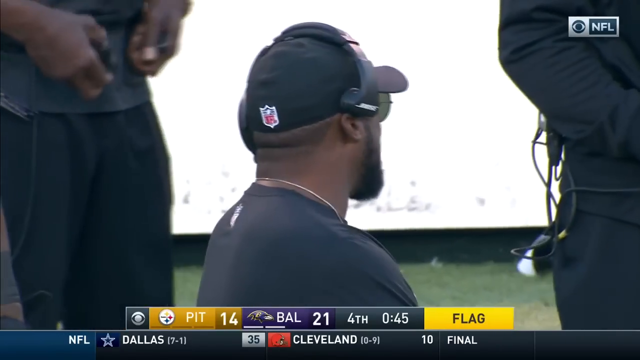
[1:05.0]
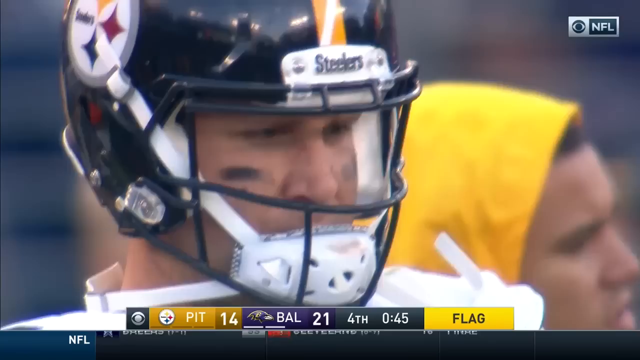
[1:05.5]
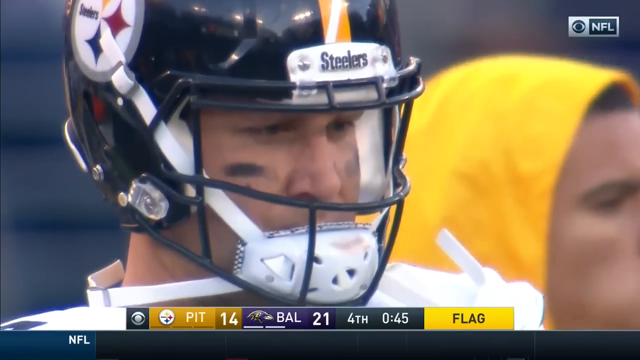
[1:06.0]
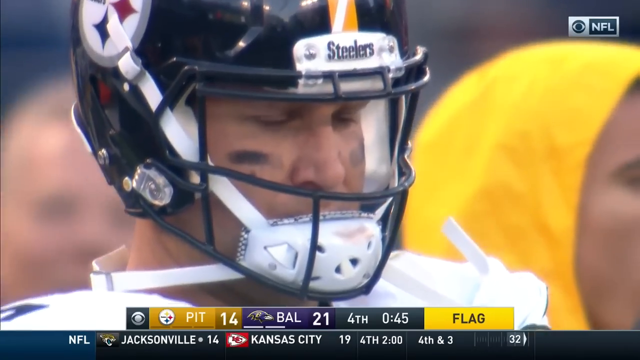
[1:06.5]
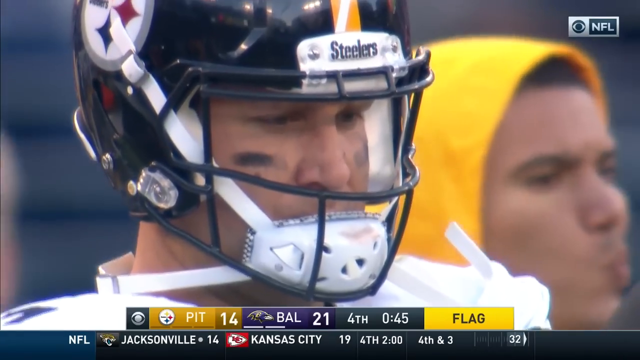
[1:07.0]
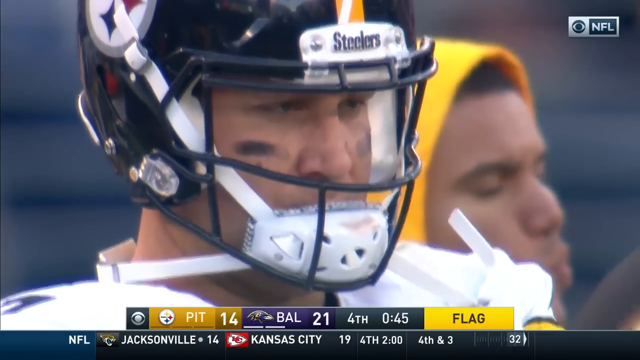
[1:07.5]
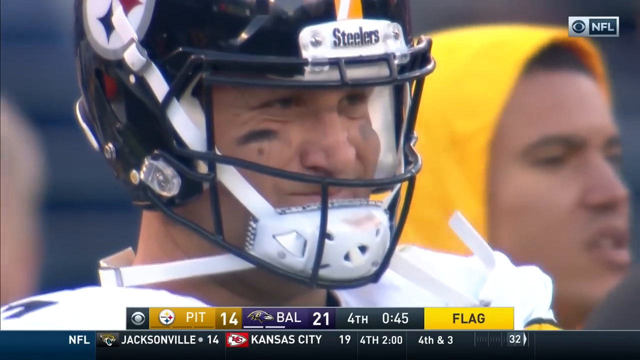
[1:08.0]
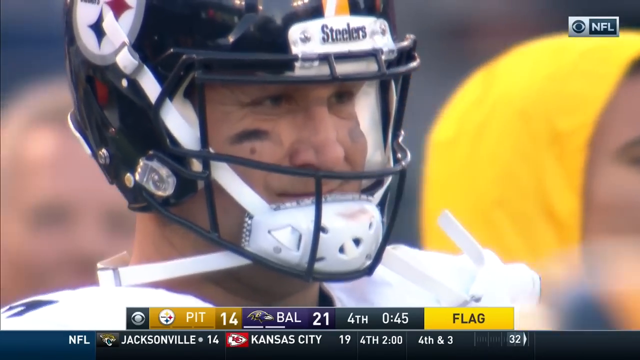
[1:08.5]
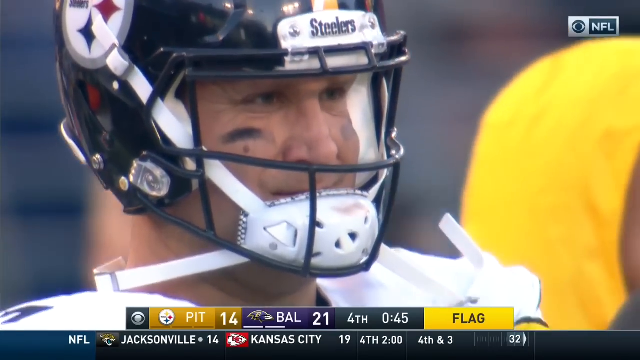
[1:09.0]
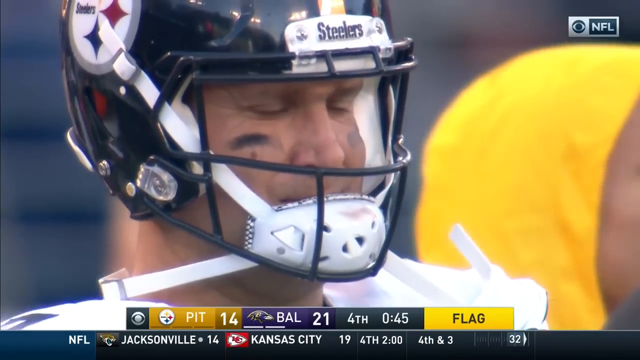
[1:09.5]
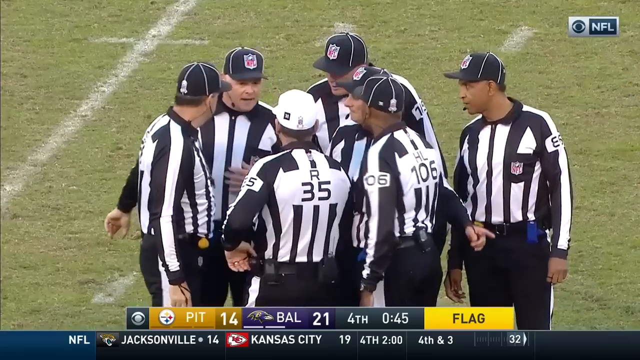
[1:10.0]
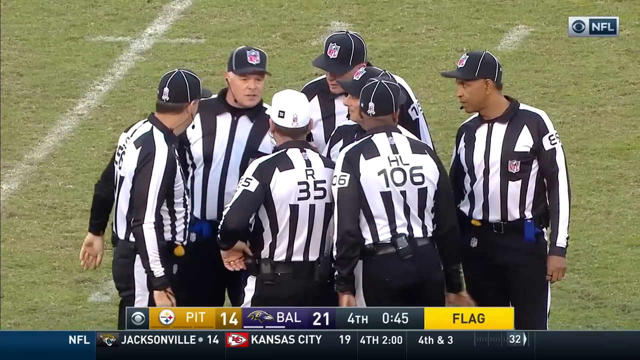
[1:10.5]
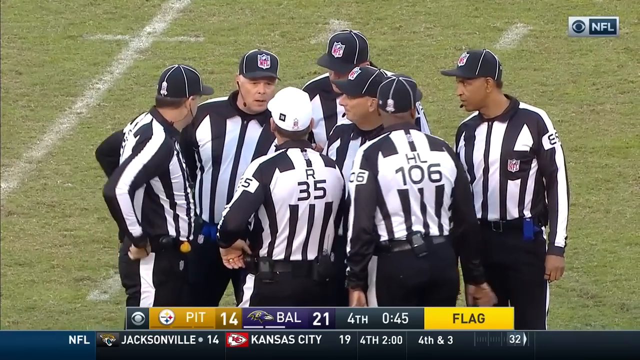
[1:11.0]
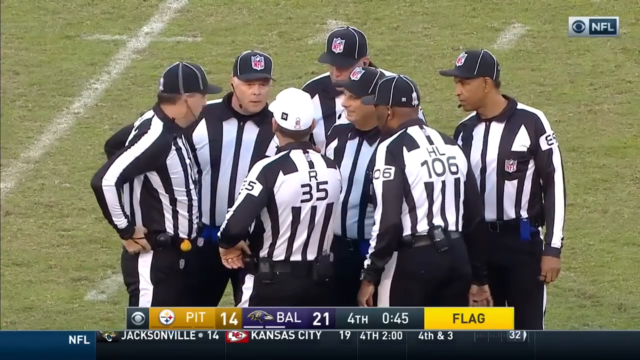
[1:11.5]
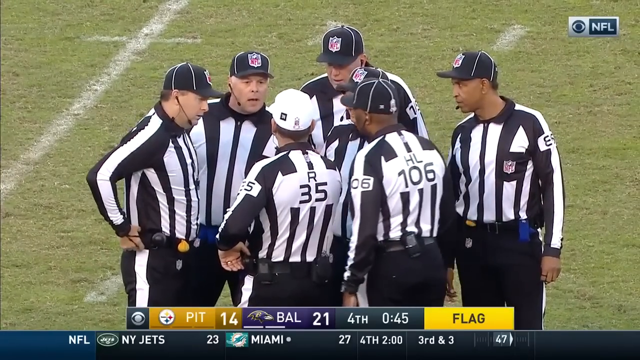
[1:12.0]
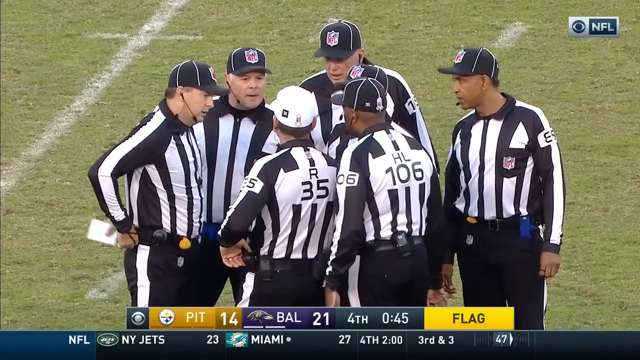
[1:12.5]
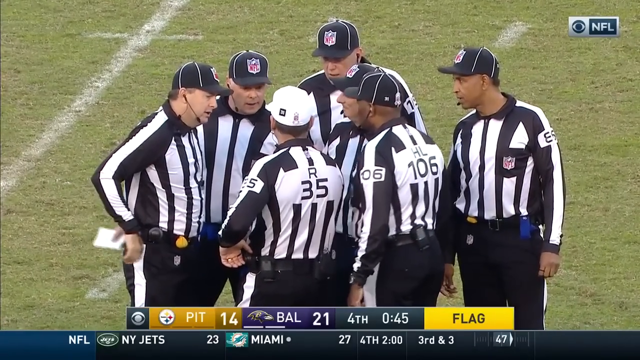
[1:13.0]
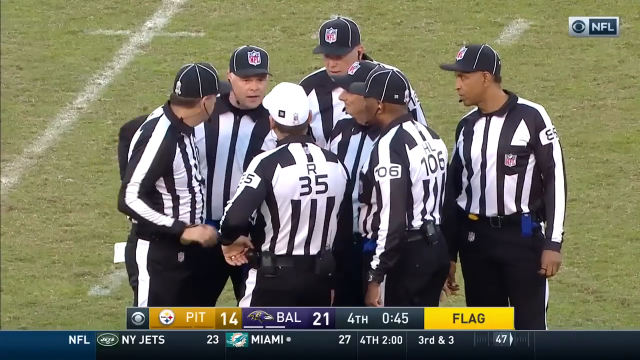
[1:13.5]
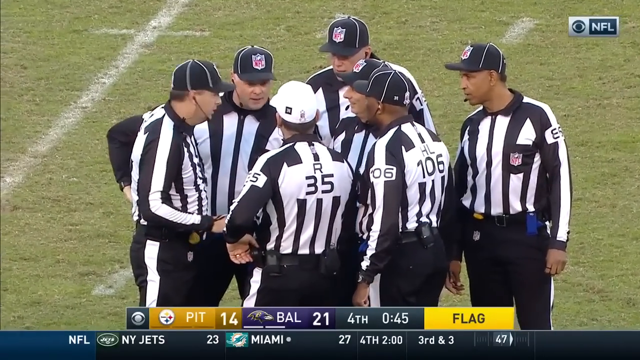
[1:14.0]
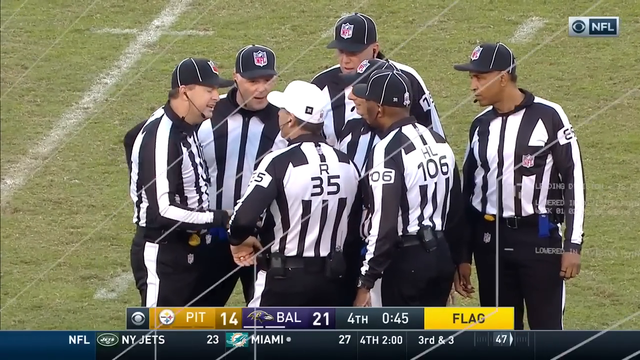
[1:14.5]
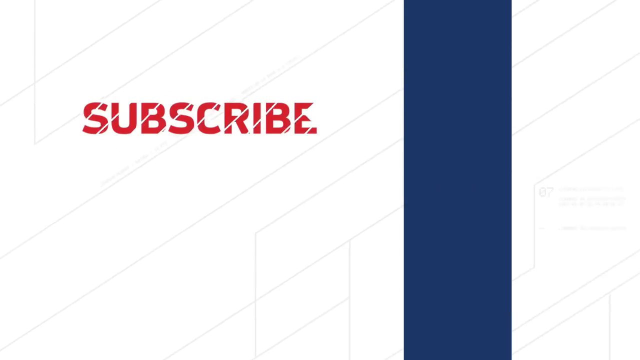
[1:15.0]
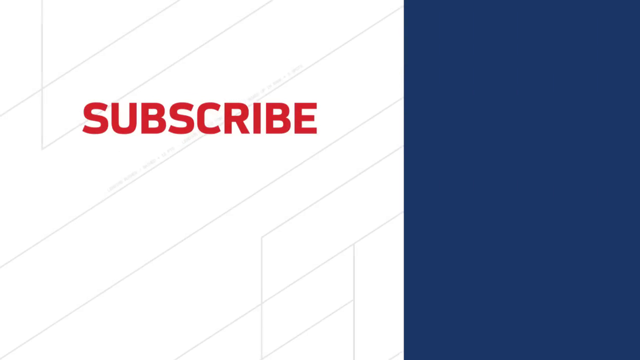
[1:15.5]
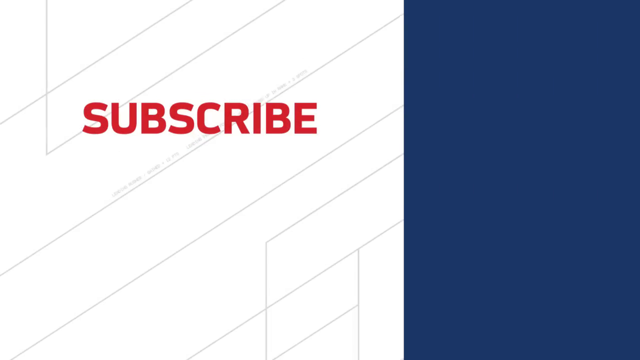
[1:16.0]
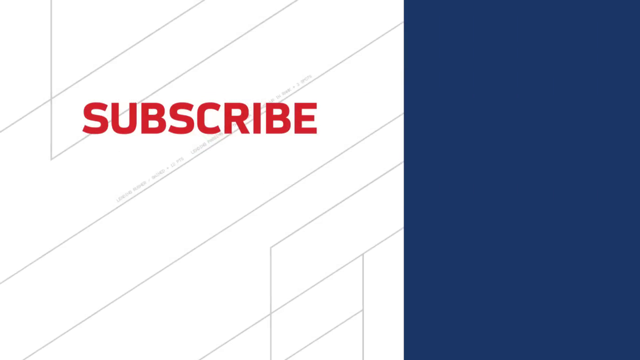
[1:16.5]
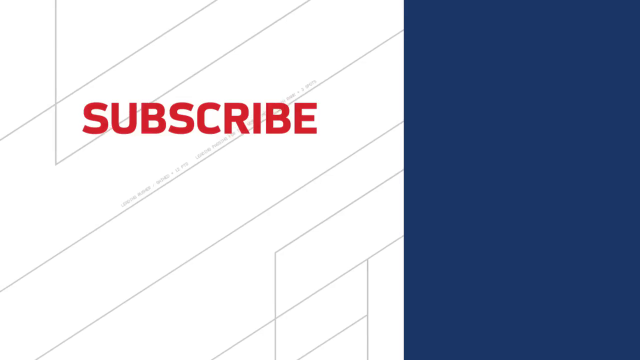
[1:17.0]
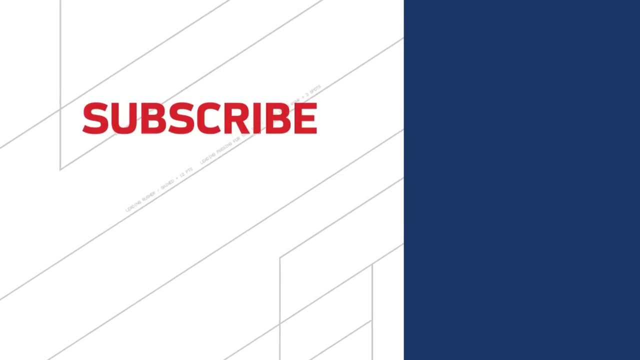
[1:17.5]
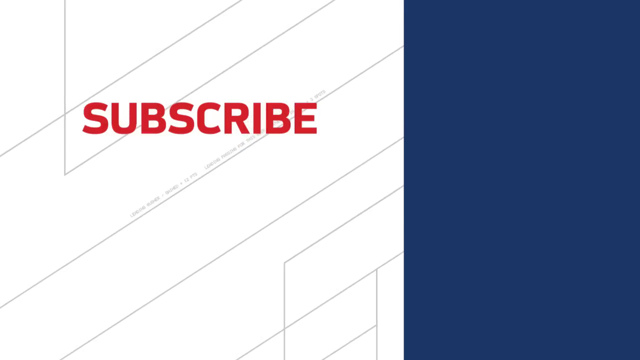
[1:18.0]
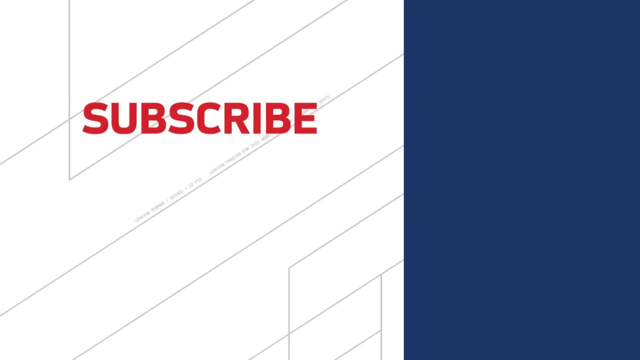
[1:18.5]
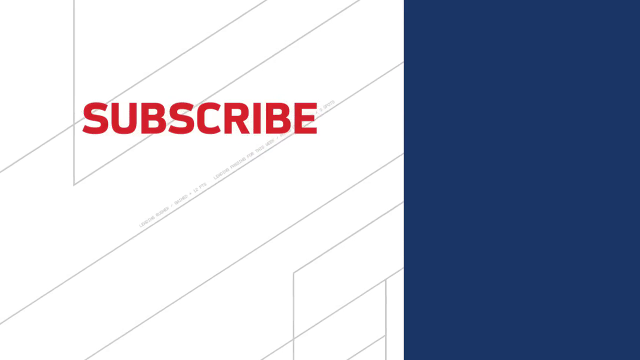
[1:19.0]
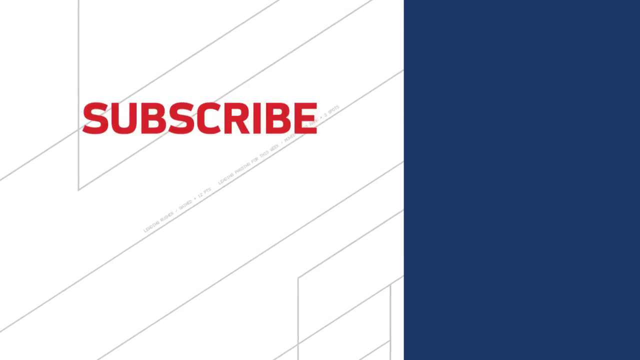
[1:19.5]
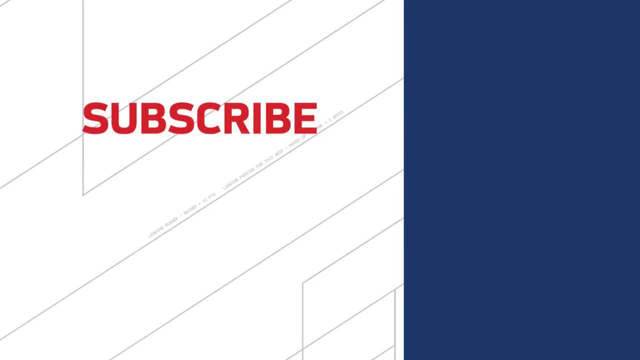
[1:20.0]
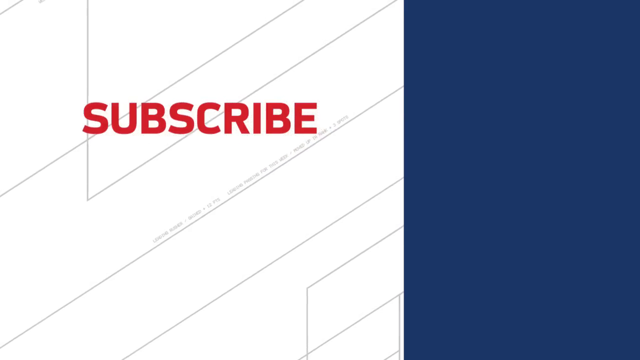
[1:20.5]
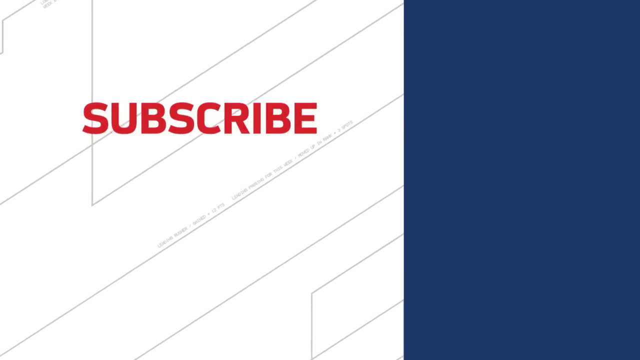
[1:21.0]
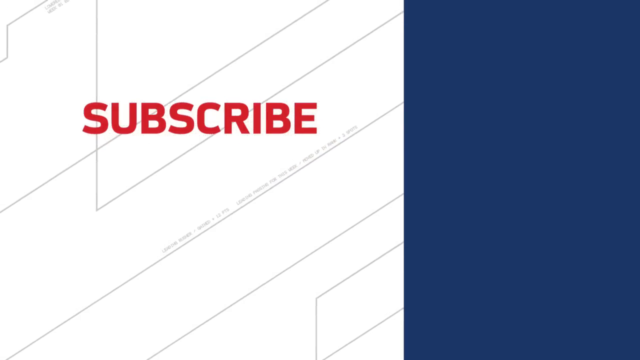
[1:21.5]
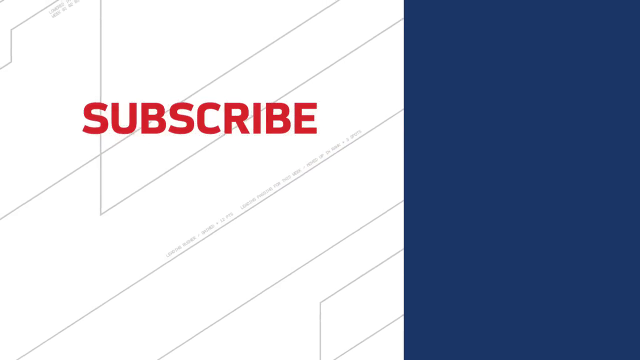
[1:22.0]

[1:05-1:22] The referees are still talking about the flag. The score is 21 to 14, Ravens over Steelers. It looks pretty cold; there is no snow, but there seems to be a chill. After the referees are shown a little longer, the video goes to an NFL end screen asking viewers to subscribe.